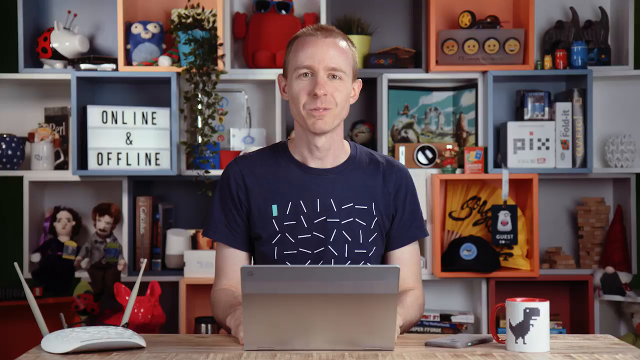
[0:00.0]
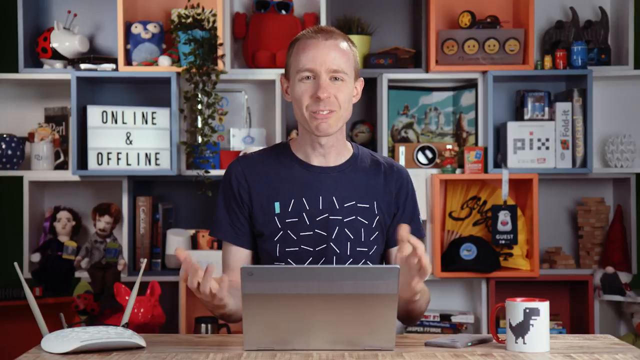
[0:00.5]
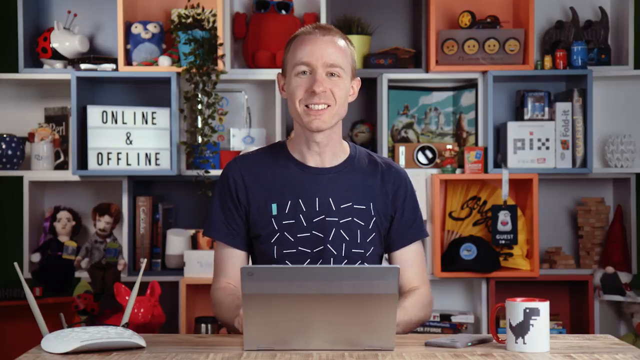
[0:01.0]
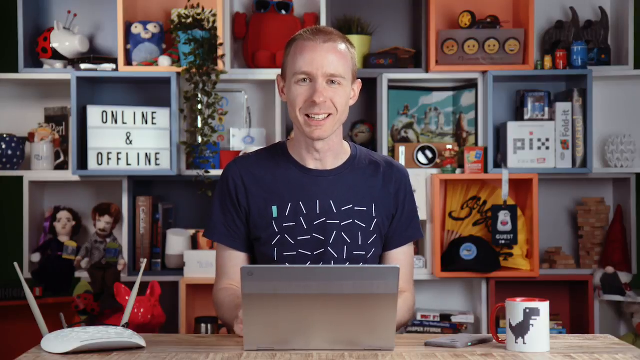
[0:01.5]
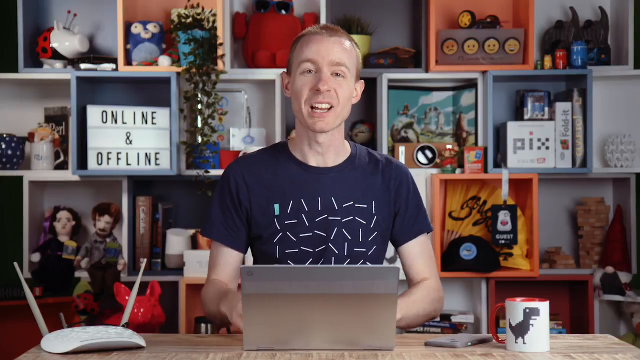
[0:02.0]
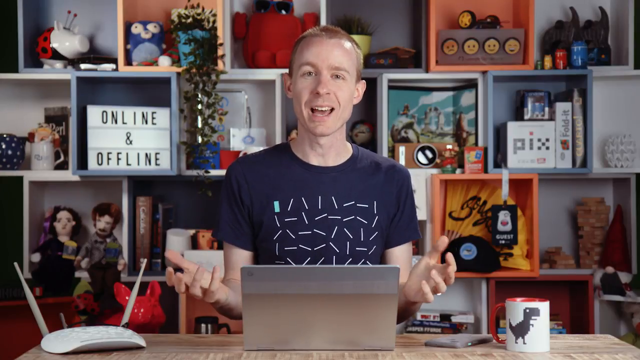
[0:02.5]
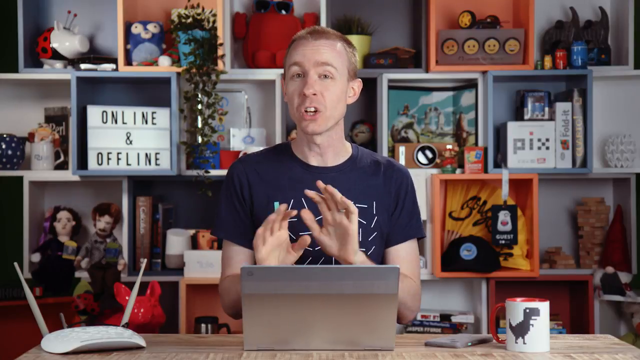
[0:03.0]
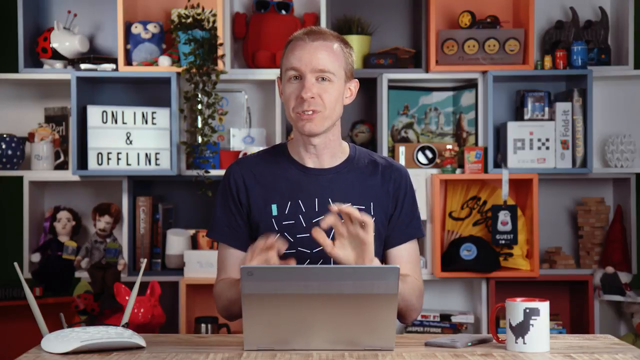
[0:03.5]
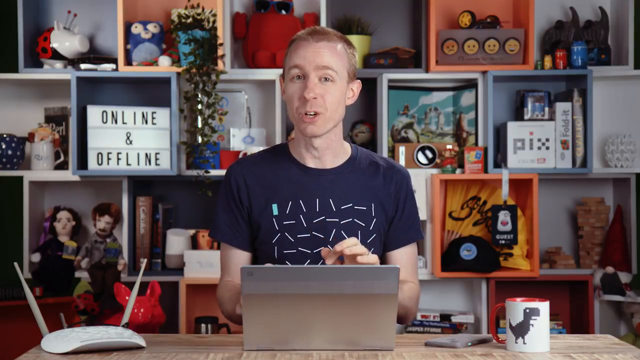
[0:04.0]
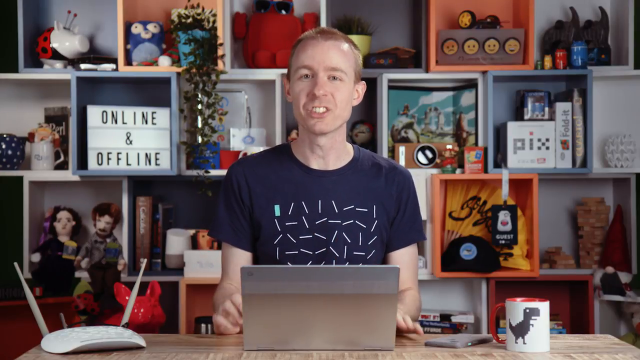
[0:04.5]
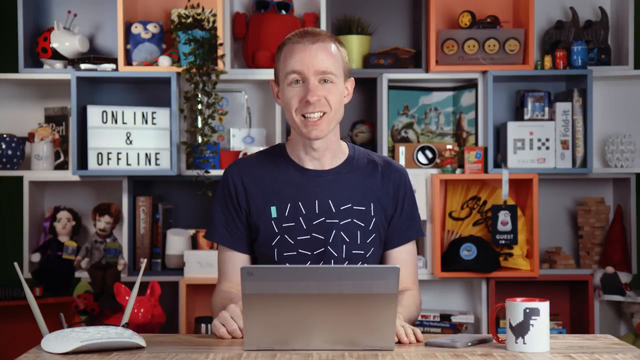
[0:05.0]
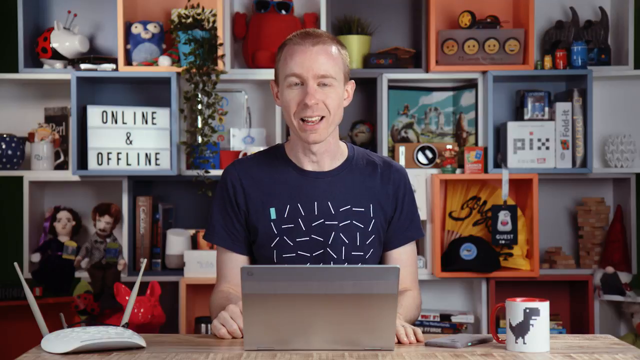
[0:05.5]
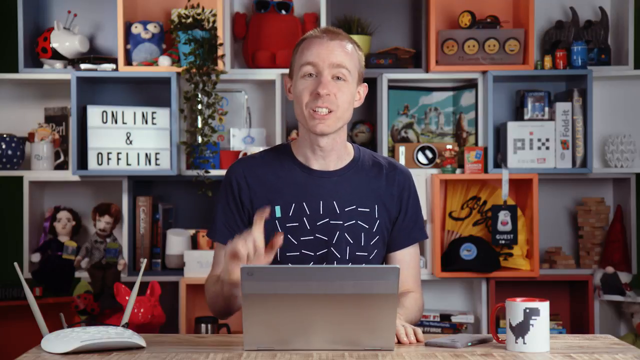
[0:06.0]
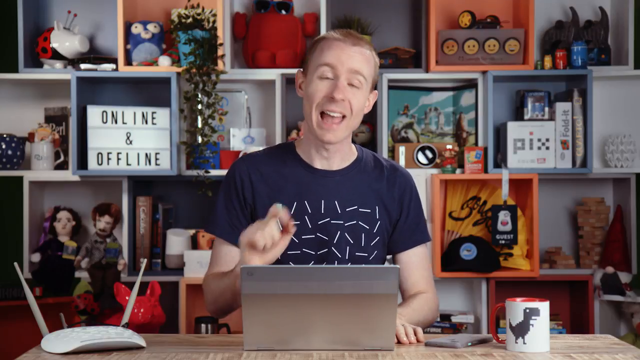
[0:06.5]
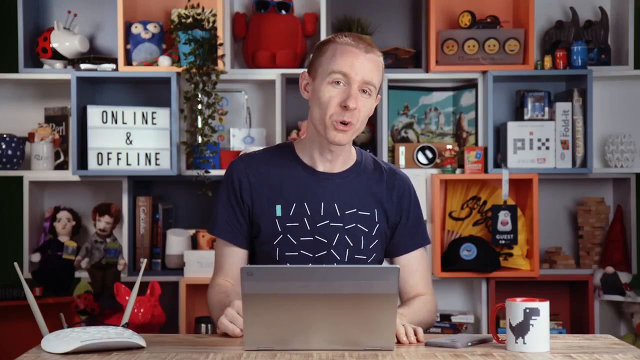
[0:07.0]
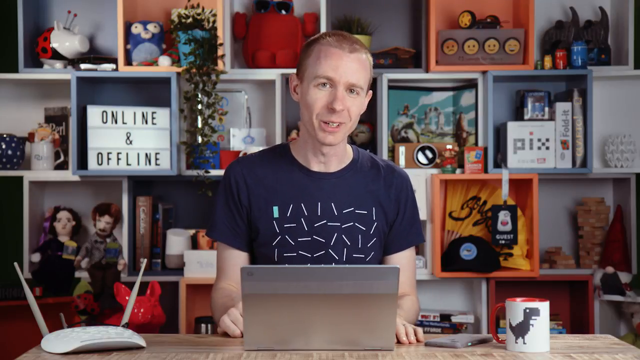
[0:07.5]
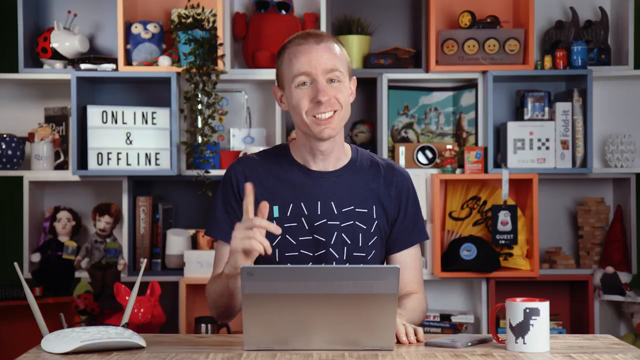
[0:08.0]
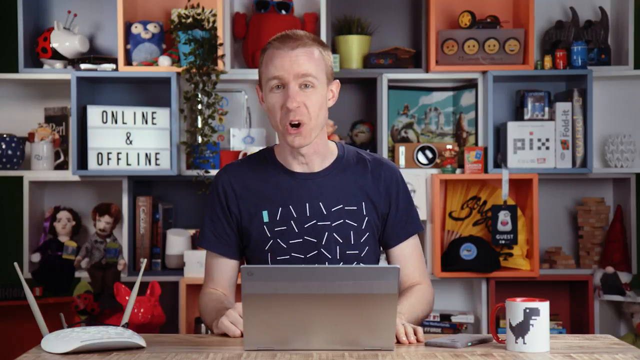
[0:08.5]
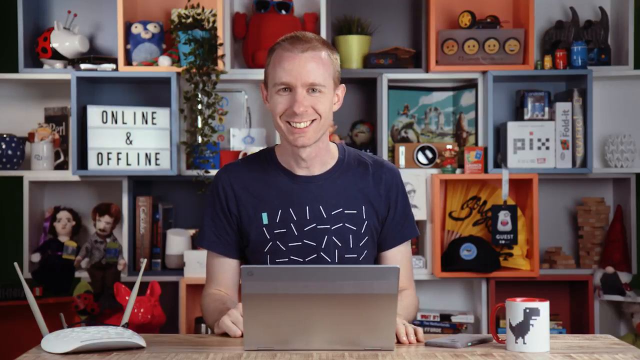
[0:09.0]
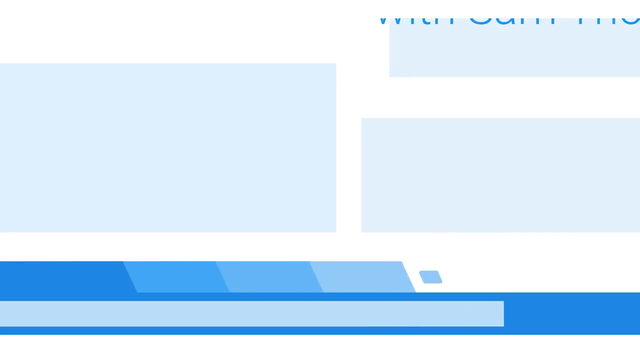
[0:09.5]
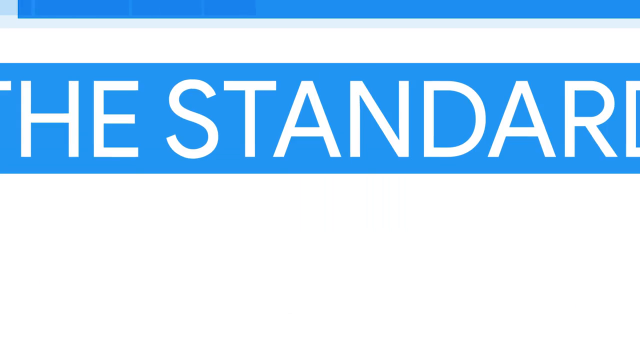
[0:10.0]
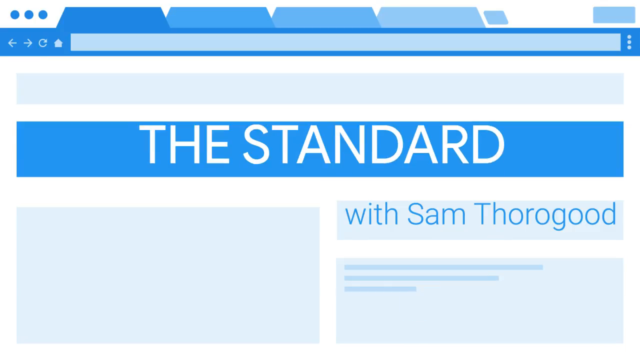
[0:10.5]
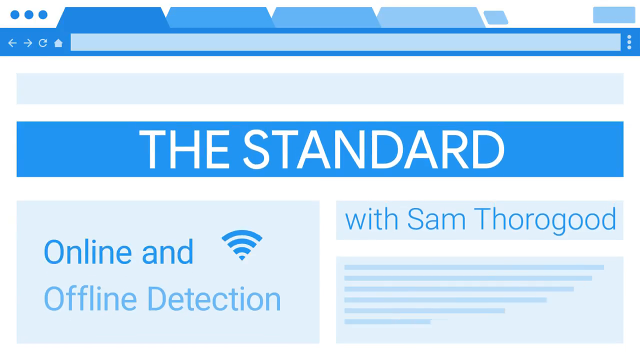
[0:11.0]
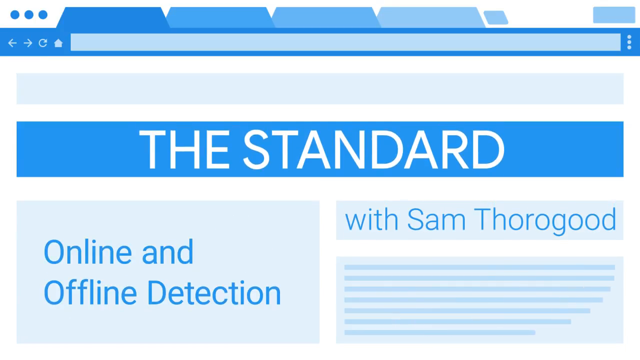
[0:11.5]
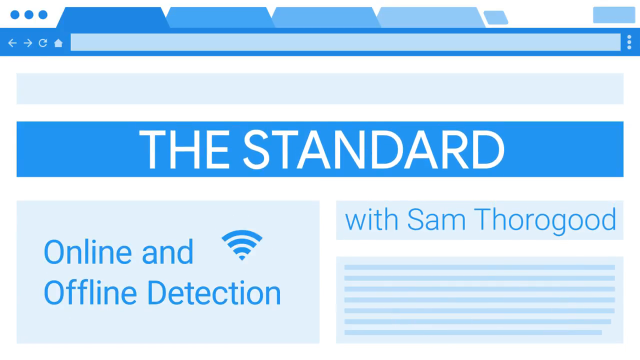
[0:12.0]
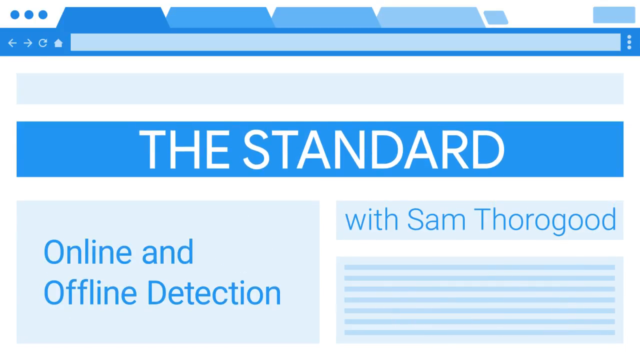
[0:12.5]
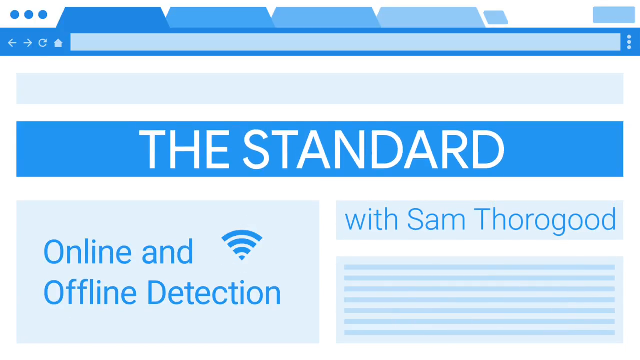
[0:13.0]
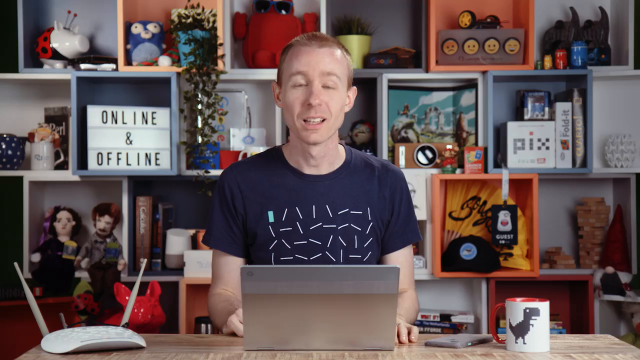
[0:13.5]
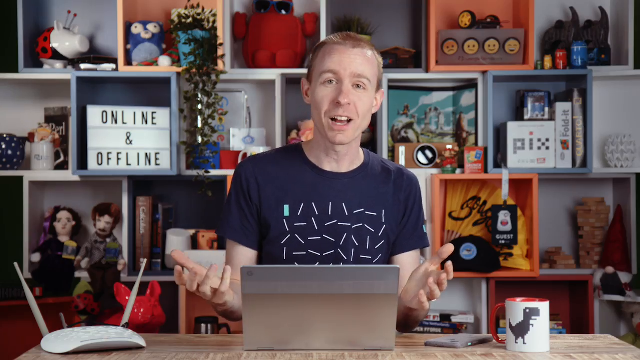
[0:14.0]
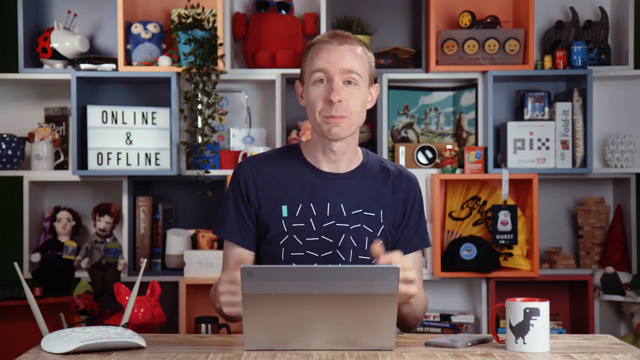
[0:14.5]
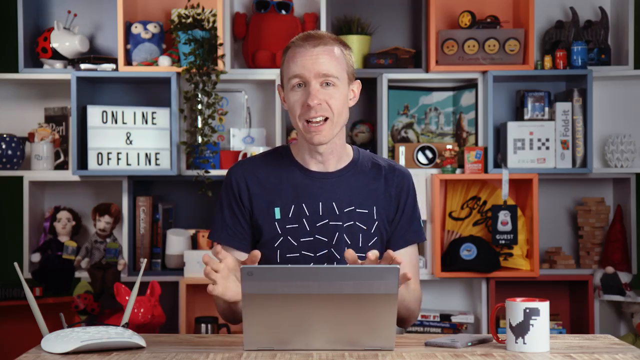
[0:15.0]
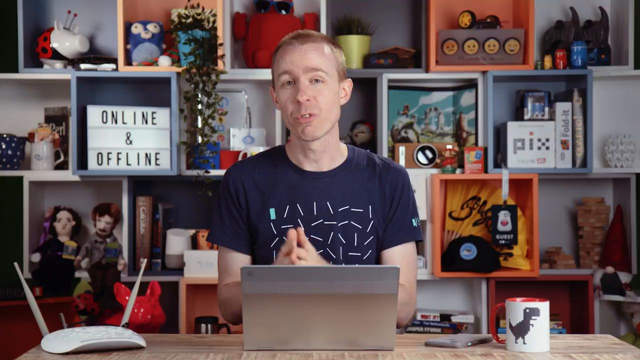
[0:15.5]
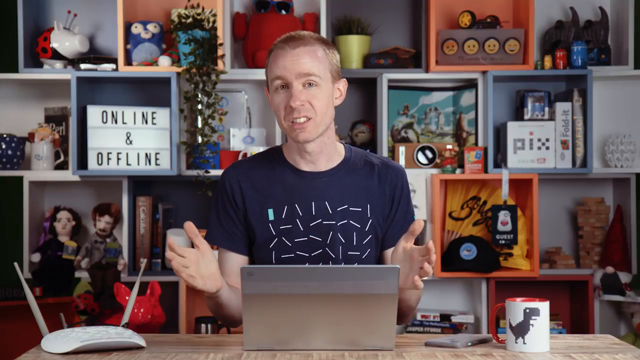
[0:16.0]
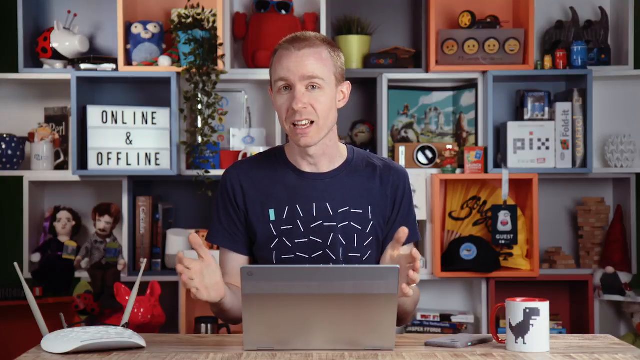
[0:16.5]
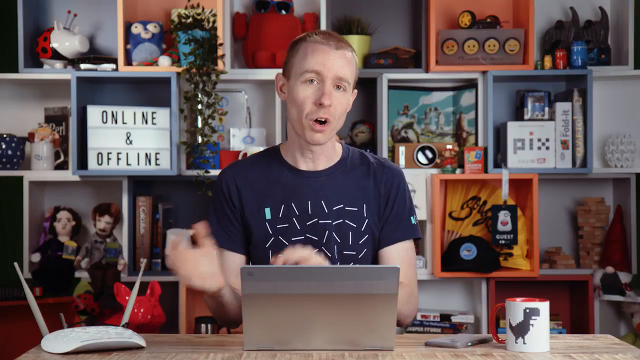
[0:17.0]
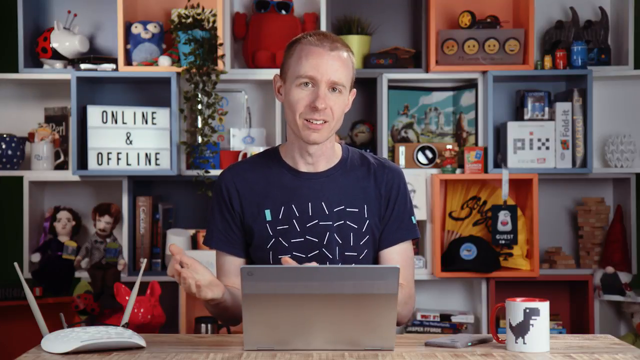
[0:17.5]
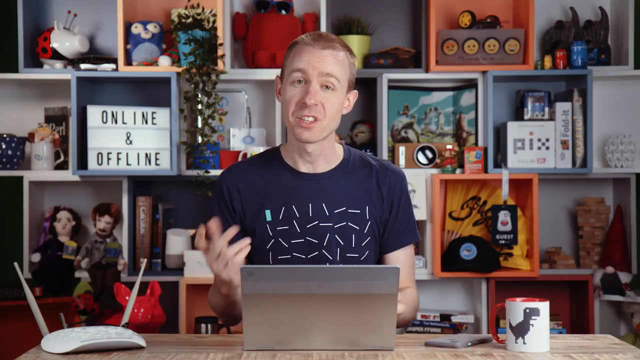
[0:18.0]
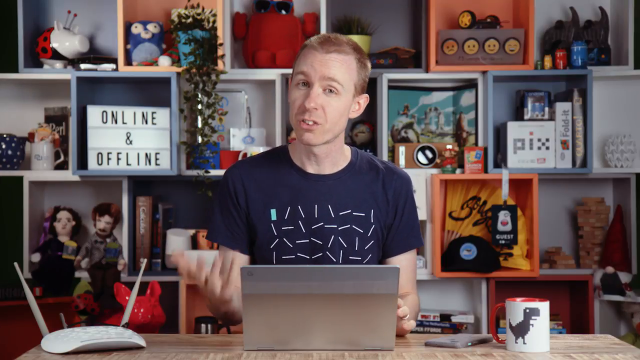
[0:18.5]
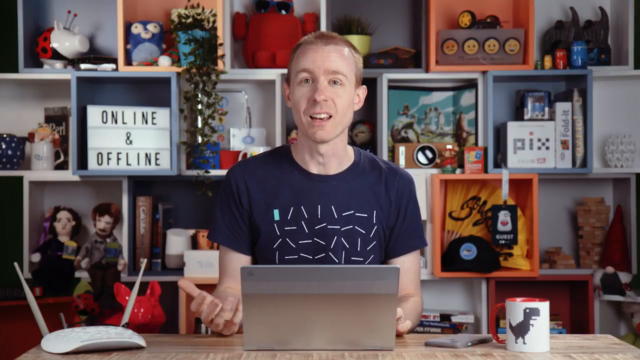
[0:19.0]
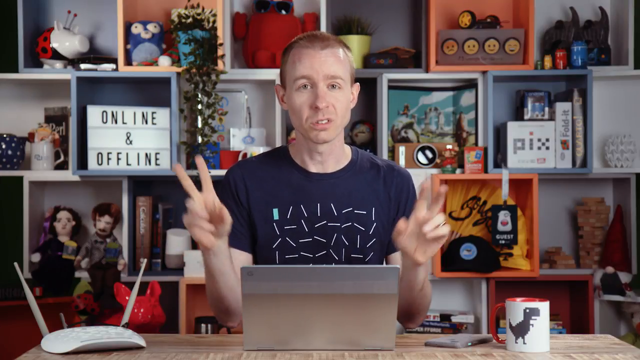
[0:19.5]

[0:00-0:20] A man is seen from the front, sitting down with a computer screen in front of him; the back of the laptop is visible. To his right is a mug with a dinosaur logo on it, and below is a series of shelves holding different signs and small objects such as dolls and cups. The man appears middle-aged and wears a dark blue t-shirt. He talks to the camera, using hand motions as he speaks. He sets his hands back down on the desk, then raises his right hand and makes a couple more gestures, including pointing upward, while he continues talking. The video switches to a white and blue design screen with the text "the standard online and offline detection." It then cuts back to the man, who keeps talking to the camera and moves his hands from side to side.